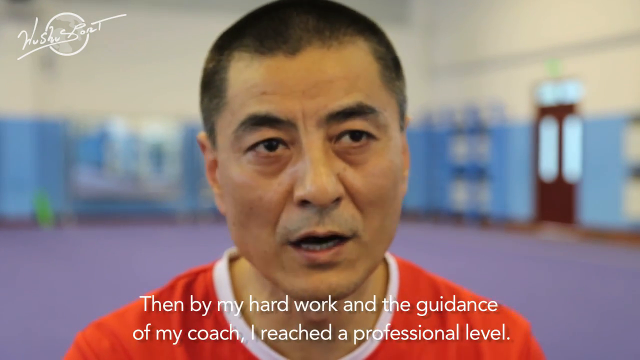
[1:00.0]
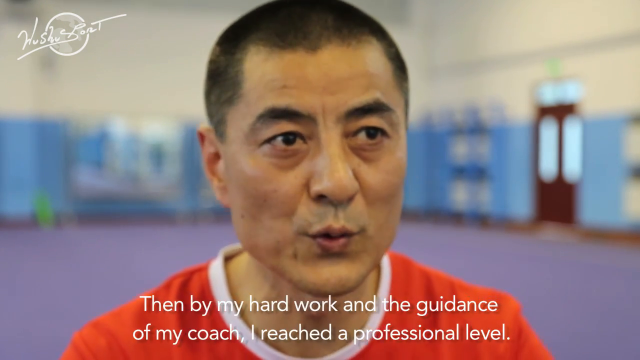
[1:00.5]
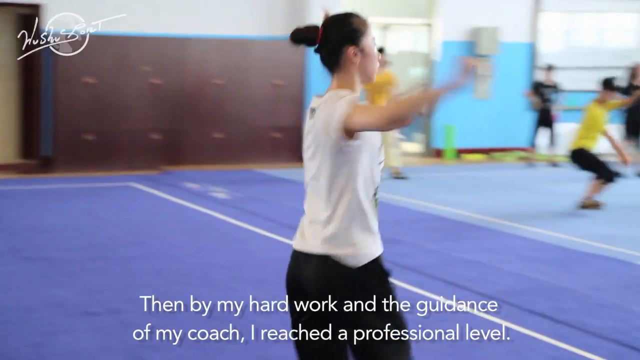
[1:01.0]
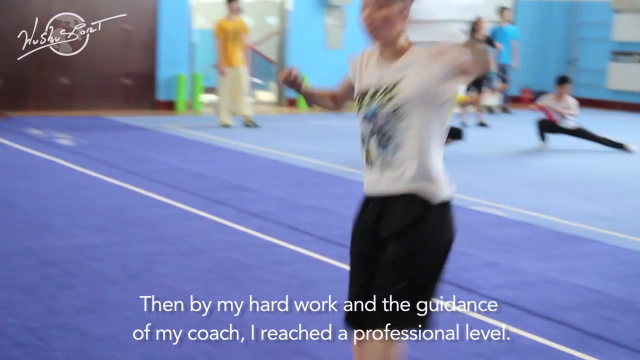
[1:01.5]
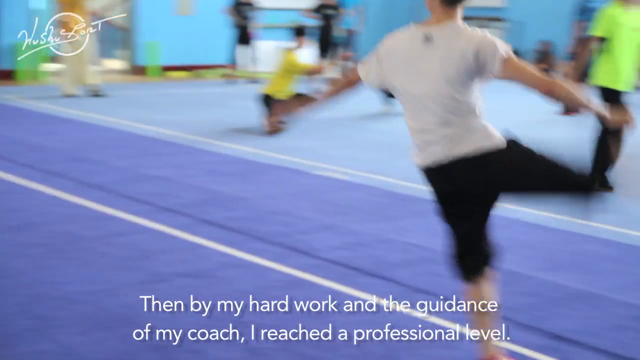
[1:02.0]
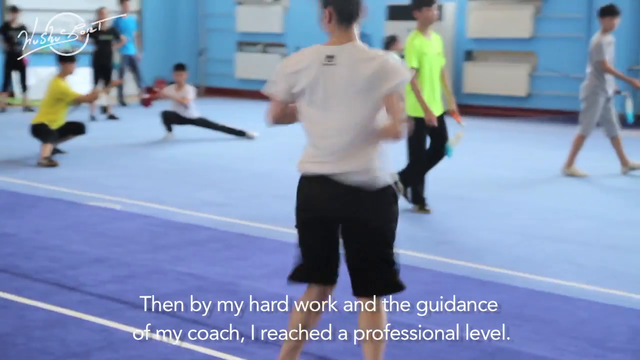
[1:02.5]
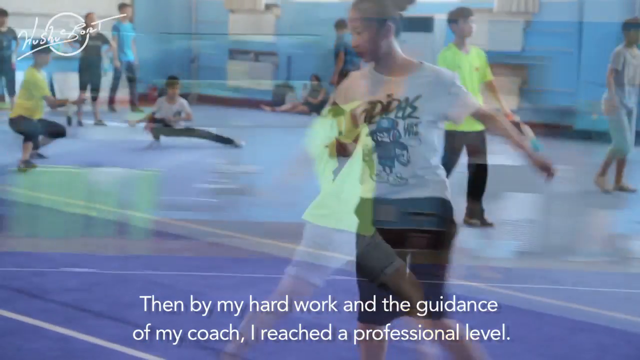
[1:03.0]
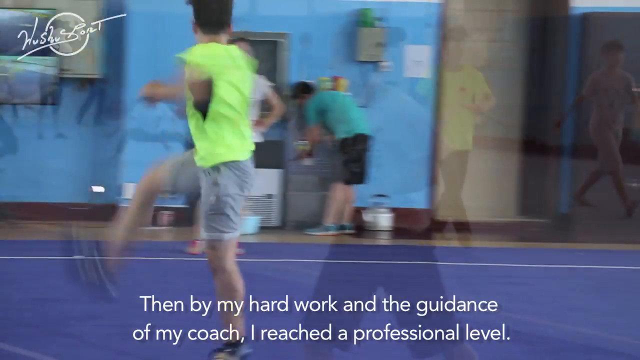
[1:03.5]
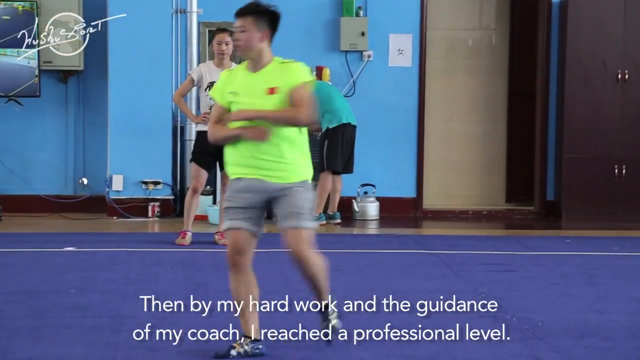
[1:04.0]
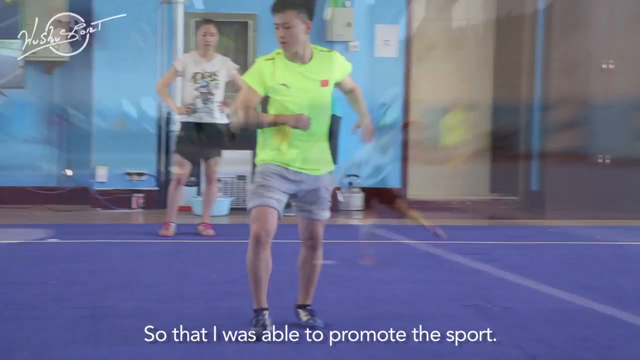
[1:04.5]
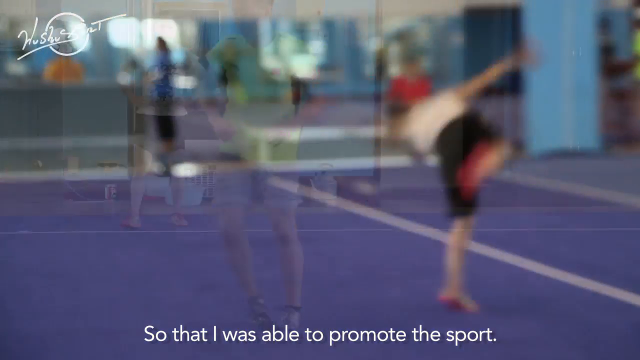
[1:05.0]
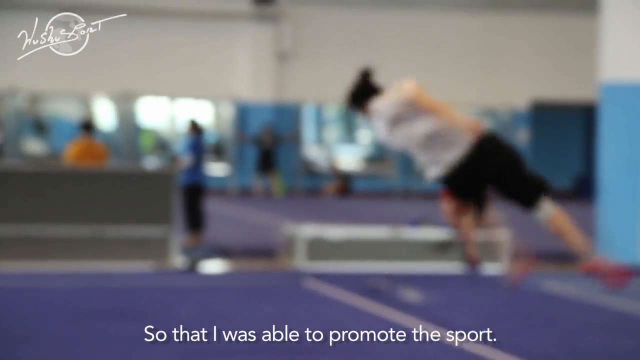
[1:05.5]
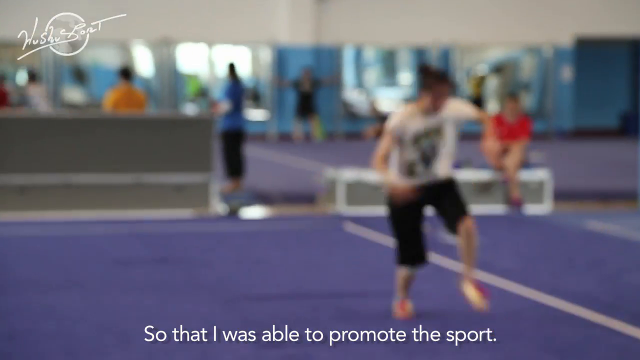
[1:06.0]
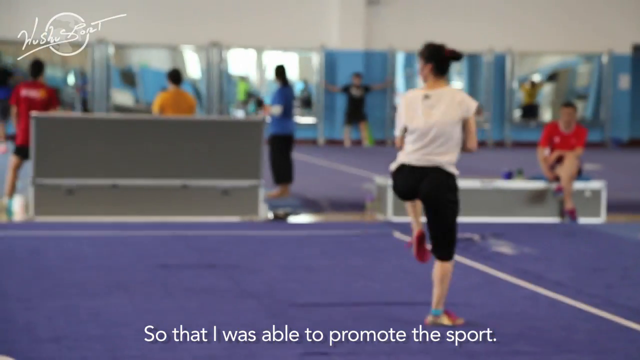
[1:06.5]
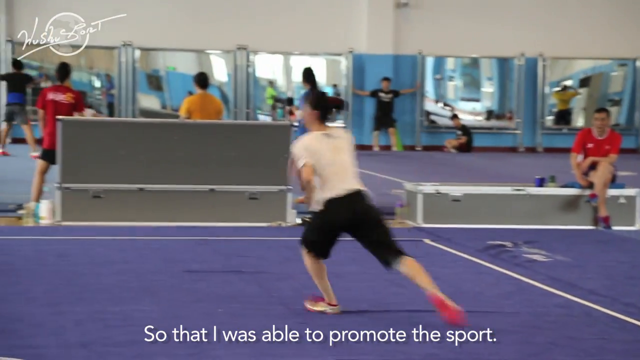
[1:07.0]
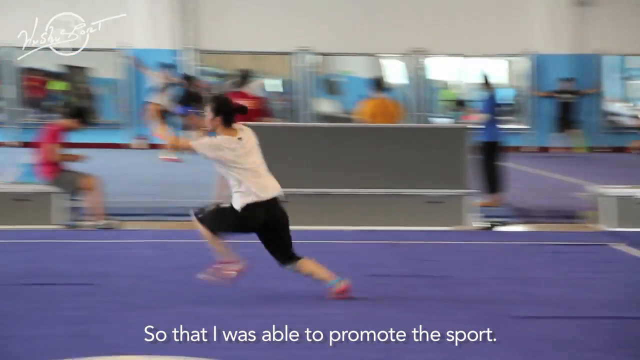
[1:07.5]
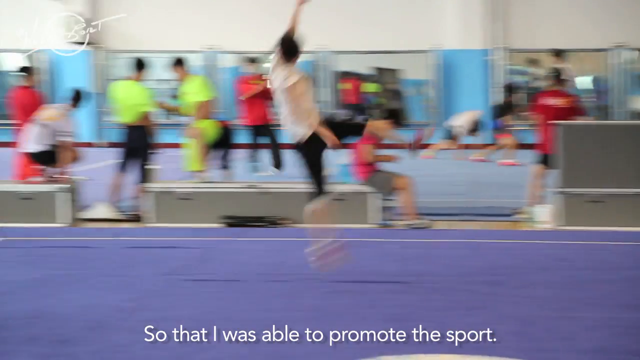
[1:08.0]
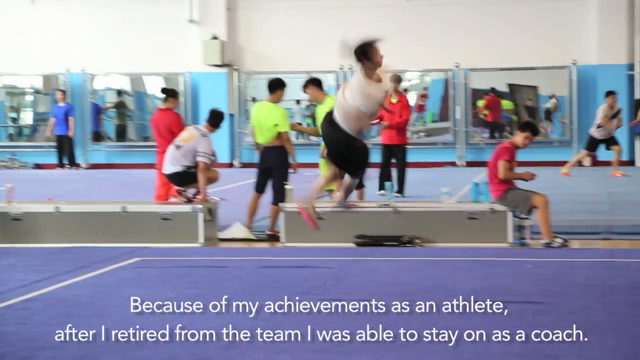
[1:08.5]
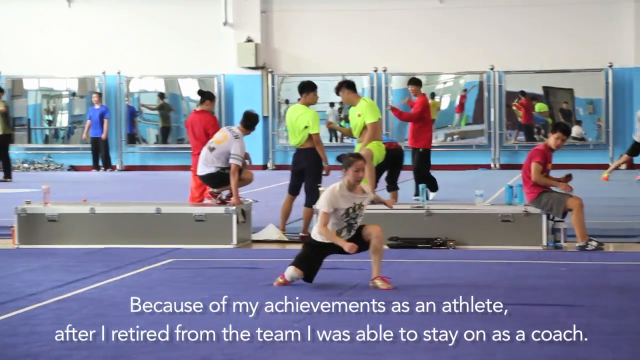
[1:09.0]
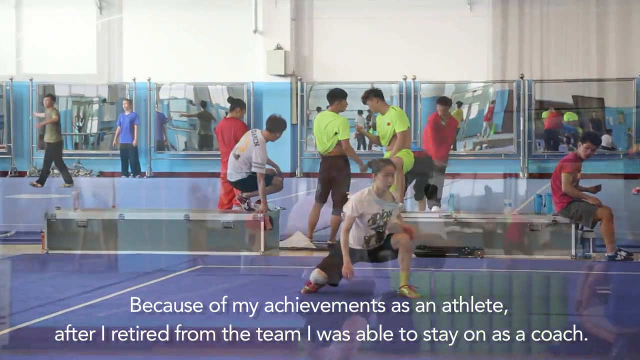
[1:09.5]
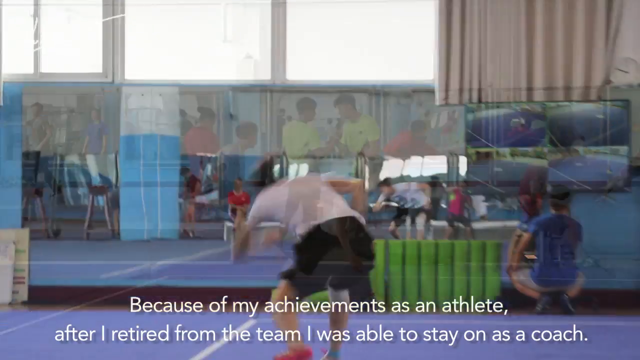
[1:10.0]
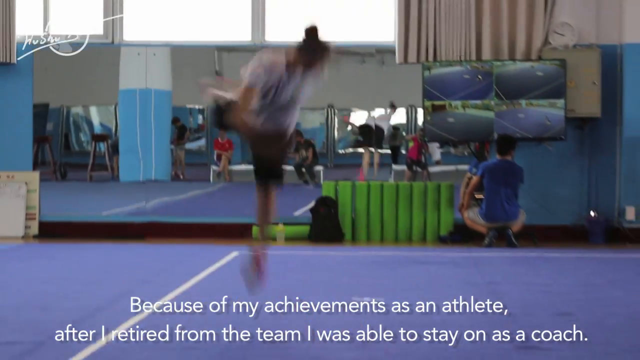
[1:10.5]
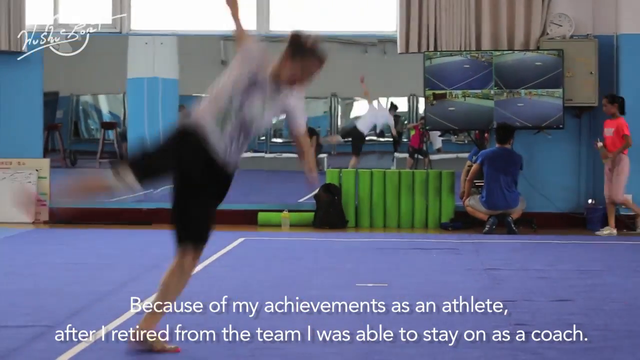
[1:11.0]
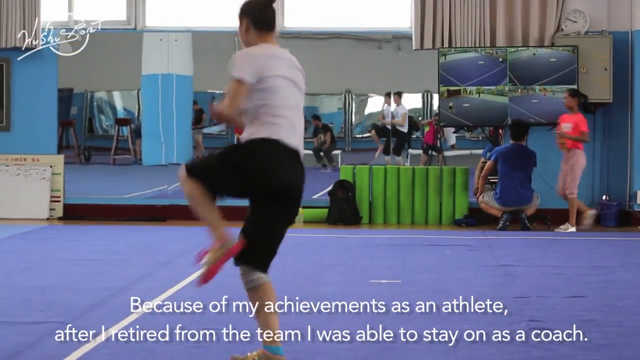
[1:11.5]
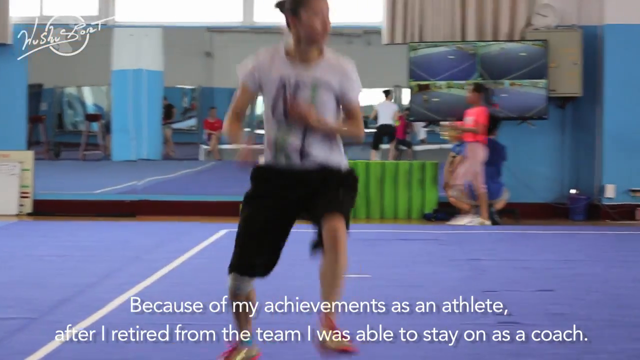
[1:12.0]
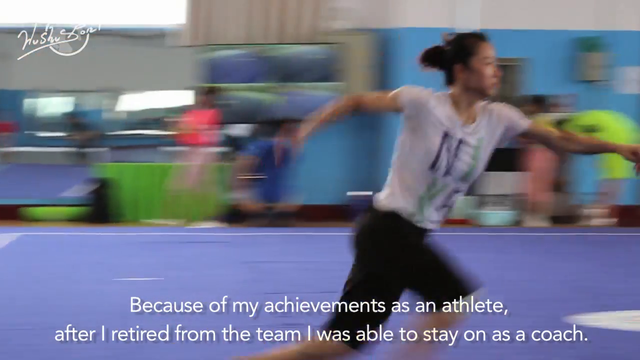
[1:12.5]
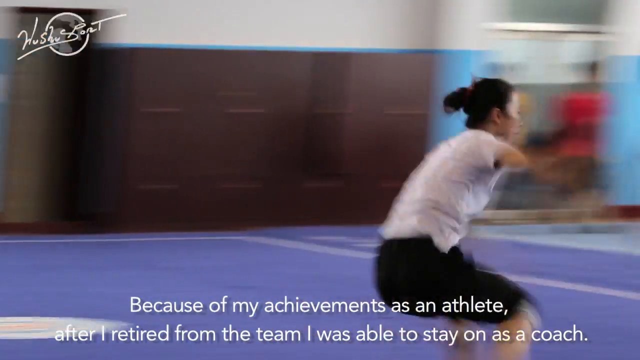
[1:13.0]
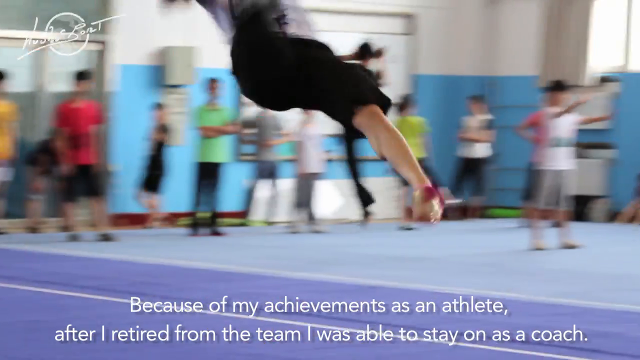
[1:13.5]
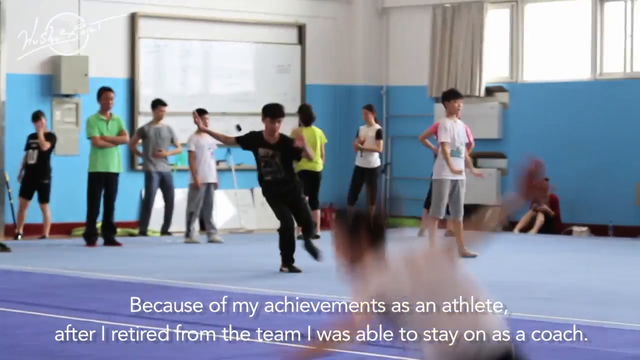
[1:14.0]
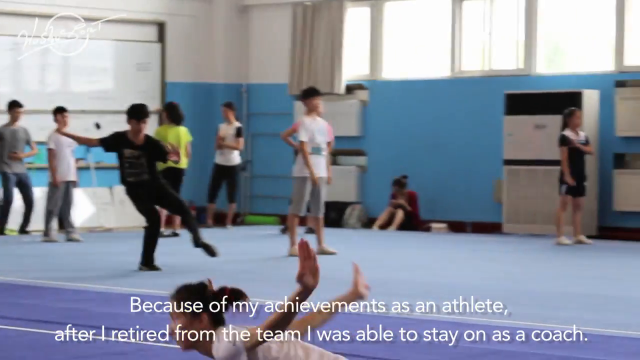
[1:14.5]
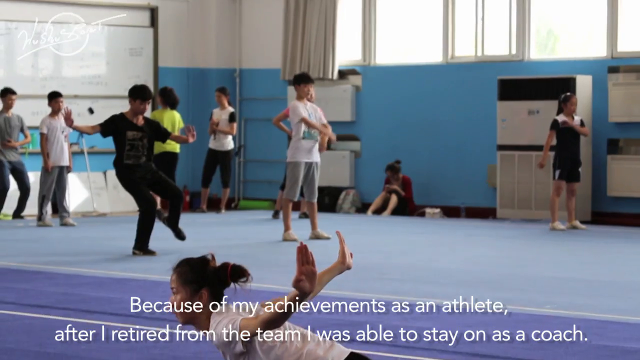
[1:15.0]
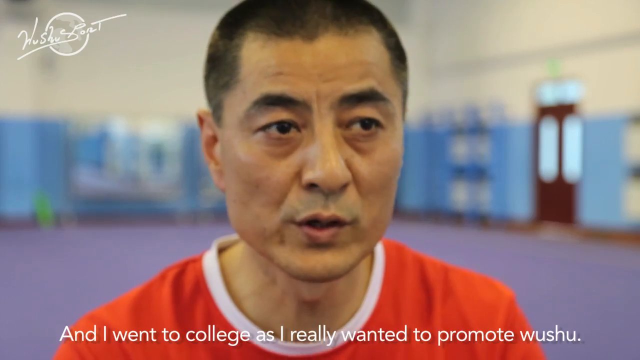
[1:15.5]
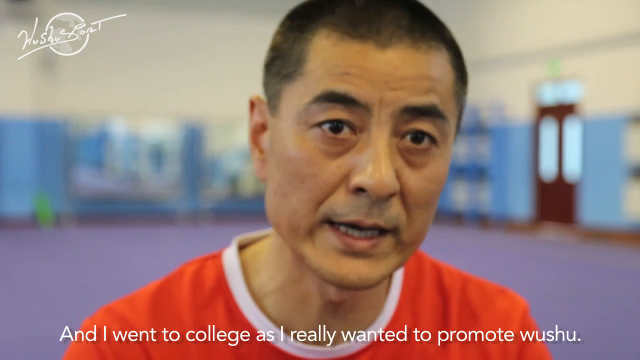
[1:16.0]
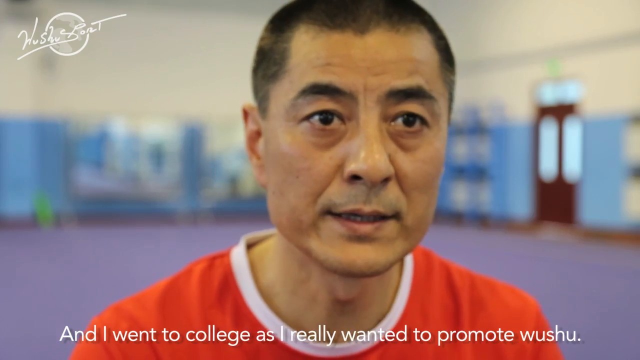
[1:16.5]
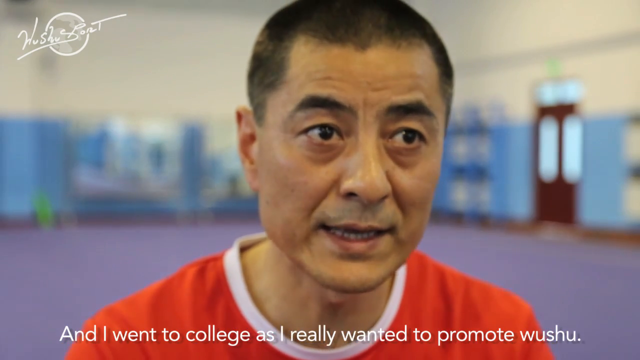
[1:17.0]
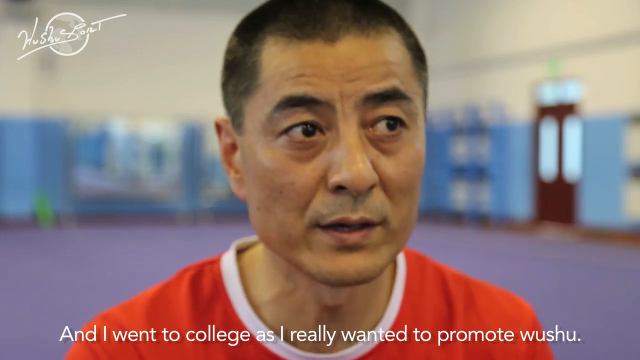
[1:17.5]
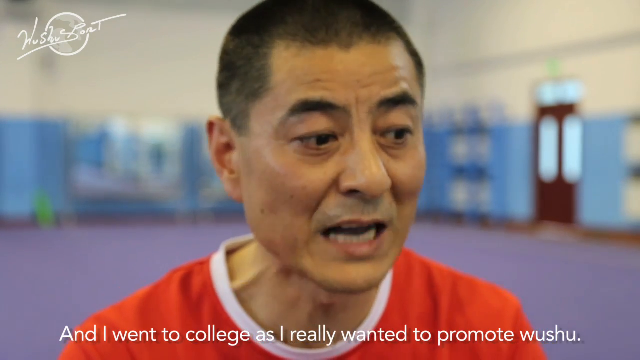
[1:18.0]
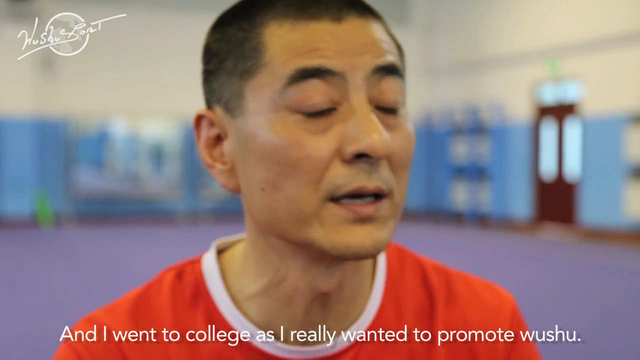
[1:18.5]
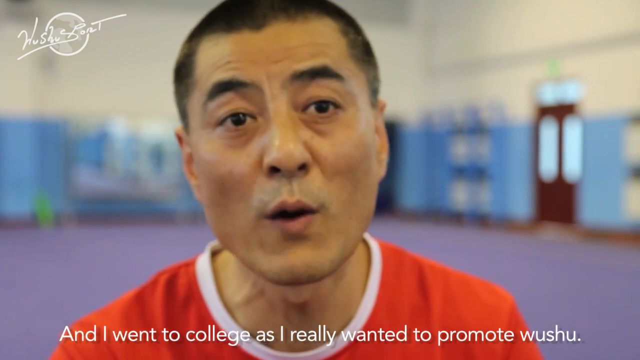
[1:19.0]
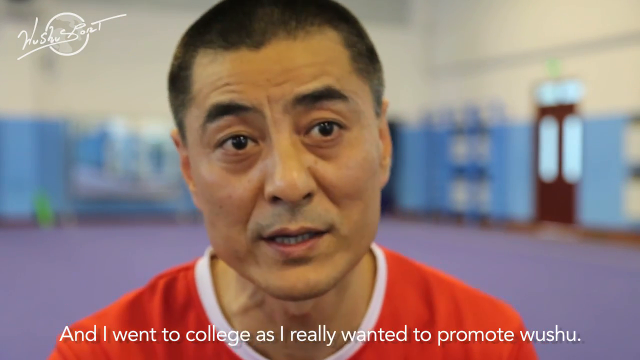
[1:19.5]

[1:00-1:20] A Chinese man with black hair, wearing a red shirt with a white collar, speaks directly to the camera in a large room whose walls are white on the top half and blue on the bottom half, with large purple or blue mats covering the floor. Captions along the bottom of the screen read: "Then by my hard work and the guidance of my coach, I reached a professional level". The scene switches to a girl with black hair pulled back in a ponytail, wearing a short-sleeved white shirt and black shorts, spinning around, kicking her legs up and holding her arms out. It then cuts to a different part of the large room, where a Chinese guy with black hair in a short-sleeved fluorescent yellow shirt and gray shorts spins around and kicks his legs around. Then a girl with black hair in a ponytail, wearing black shorts and a white shirt, does flips in the air.